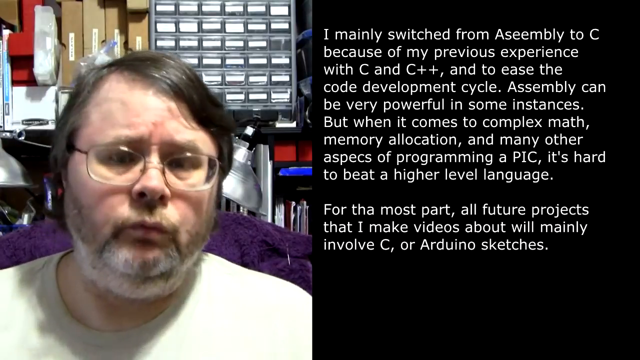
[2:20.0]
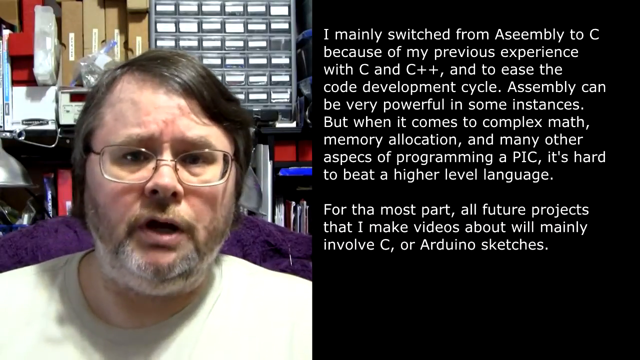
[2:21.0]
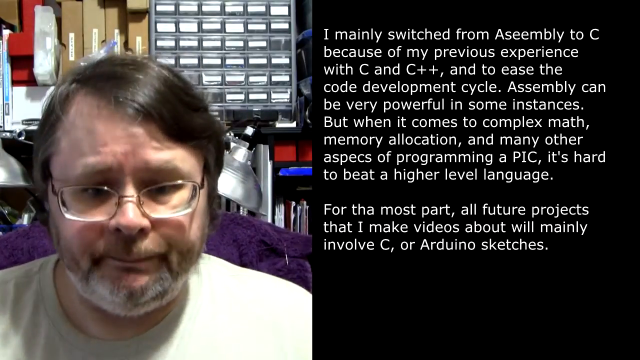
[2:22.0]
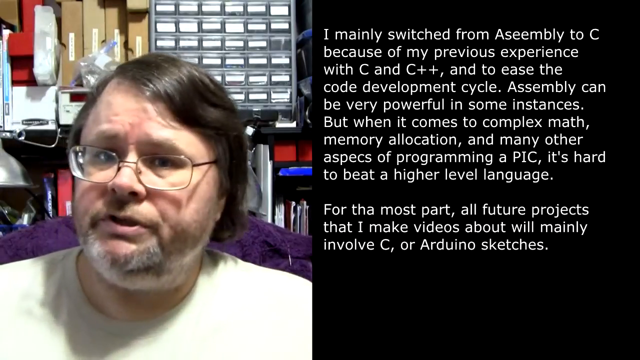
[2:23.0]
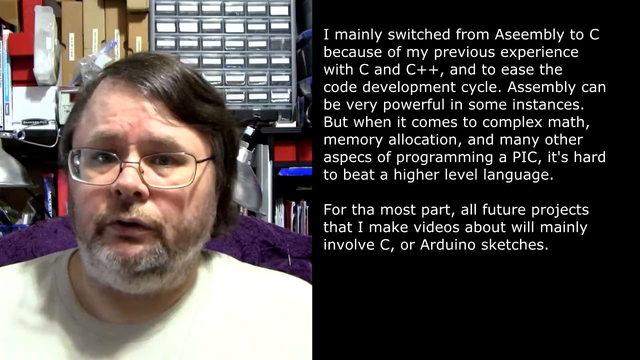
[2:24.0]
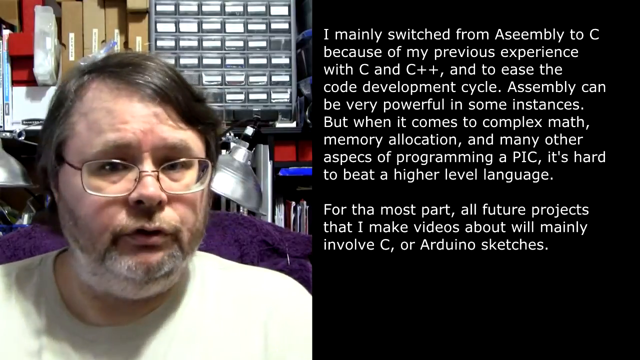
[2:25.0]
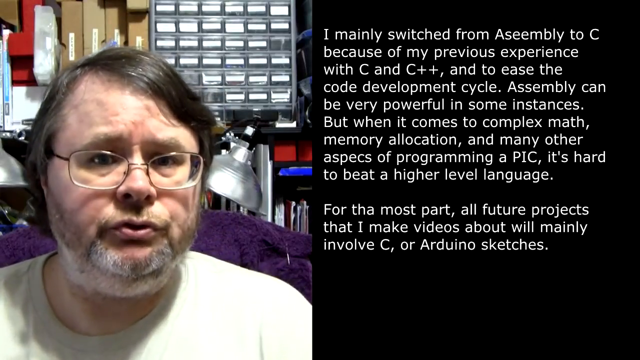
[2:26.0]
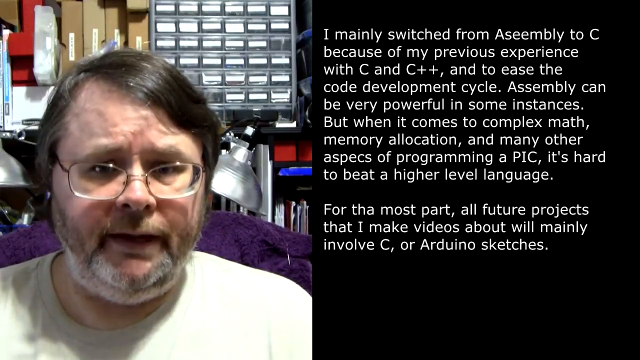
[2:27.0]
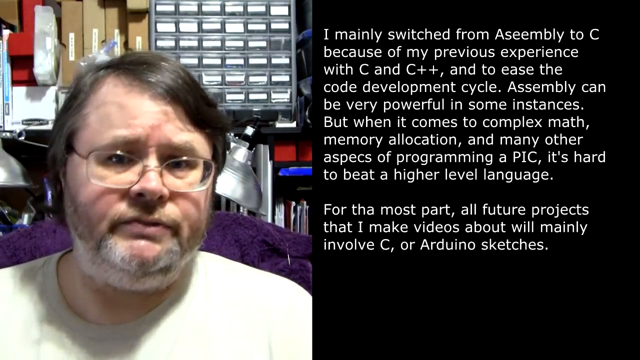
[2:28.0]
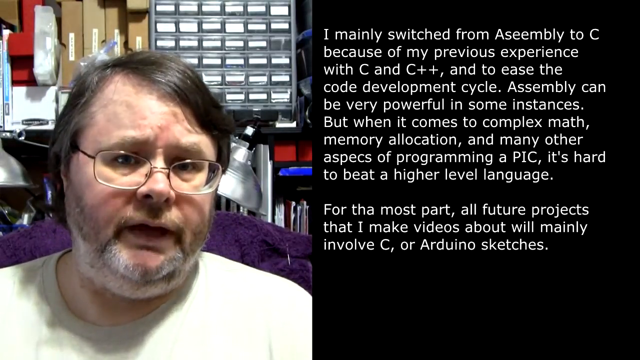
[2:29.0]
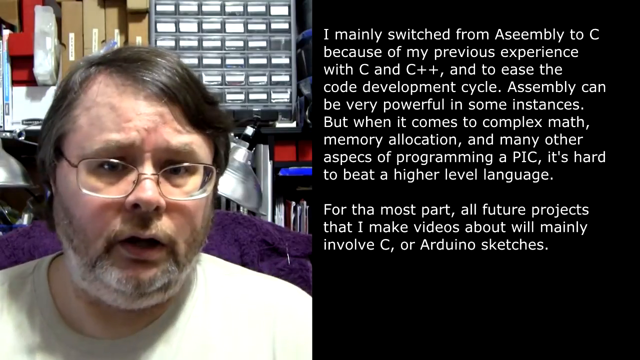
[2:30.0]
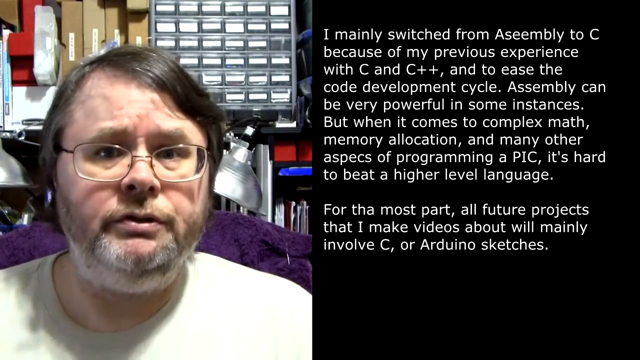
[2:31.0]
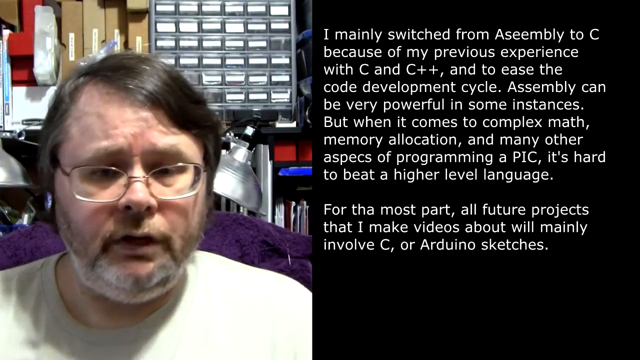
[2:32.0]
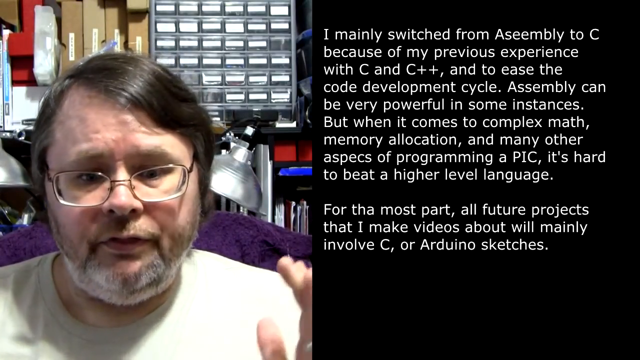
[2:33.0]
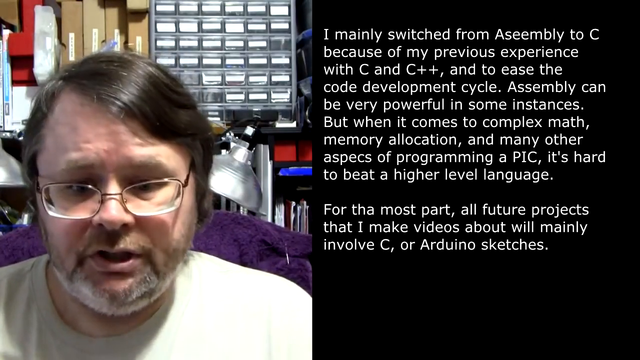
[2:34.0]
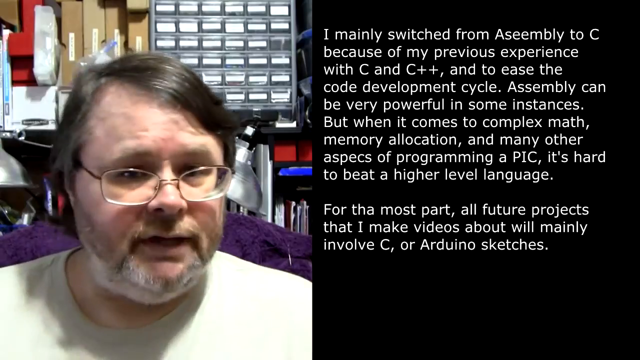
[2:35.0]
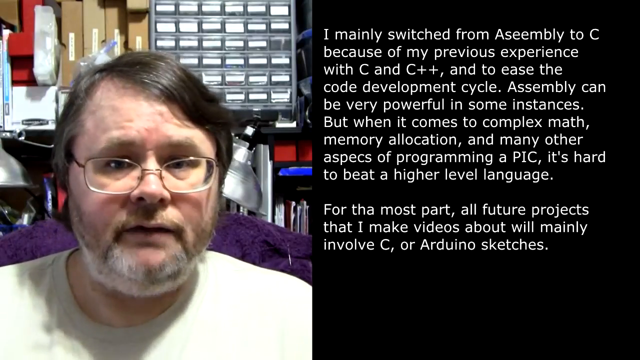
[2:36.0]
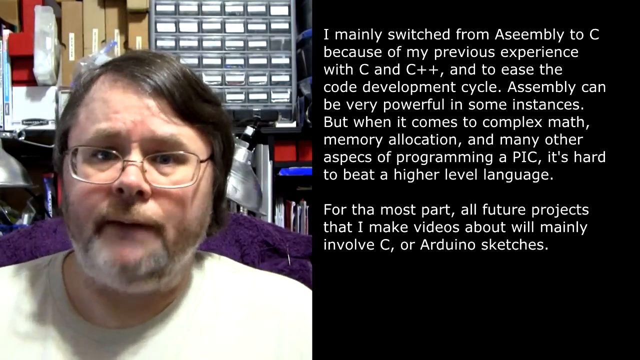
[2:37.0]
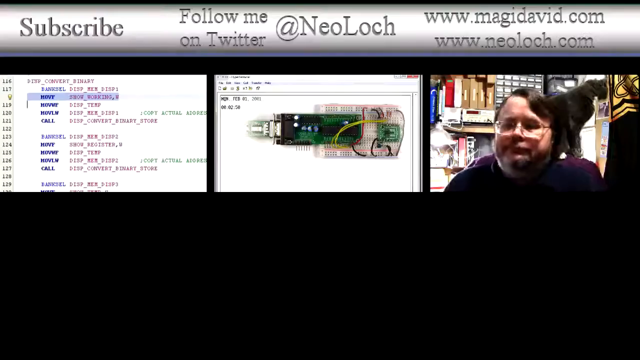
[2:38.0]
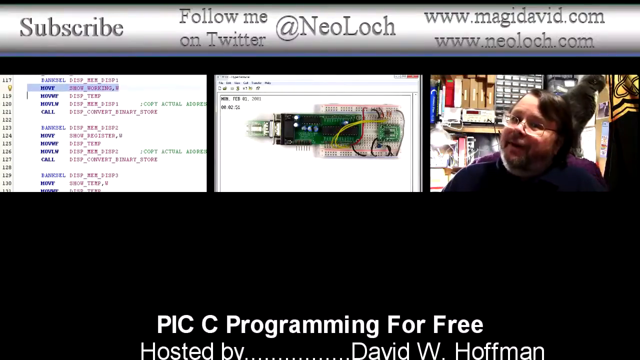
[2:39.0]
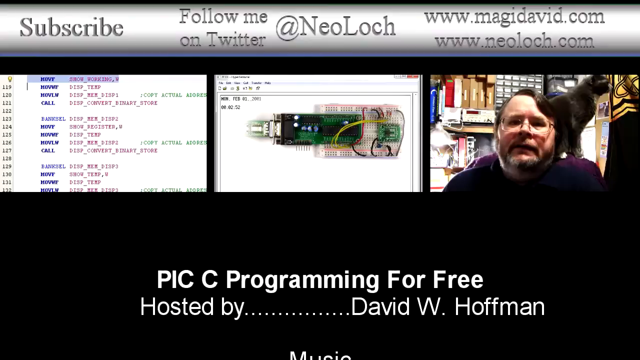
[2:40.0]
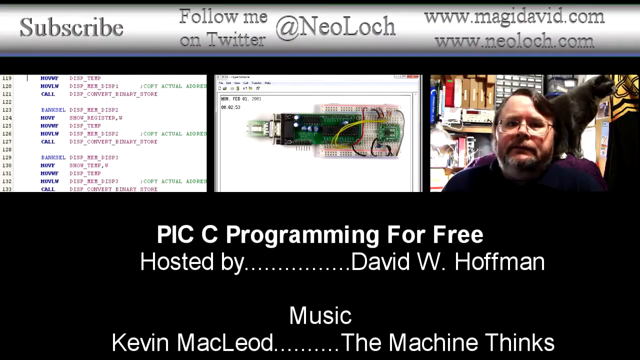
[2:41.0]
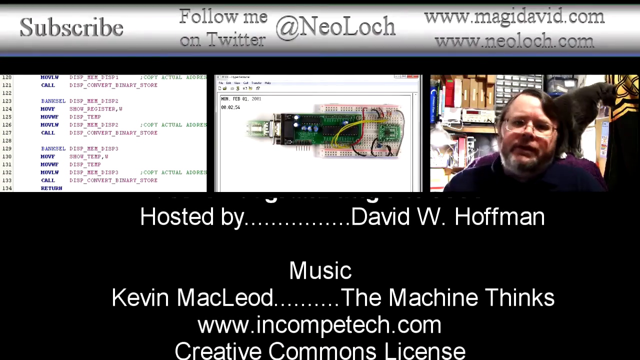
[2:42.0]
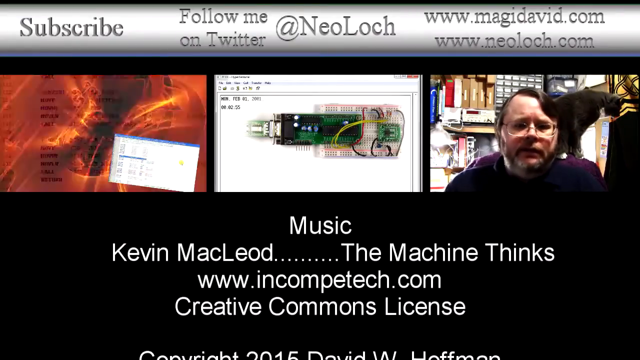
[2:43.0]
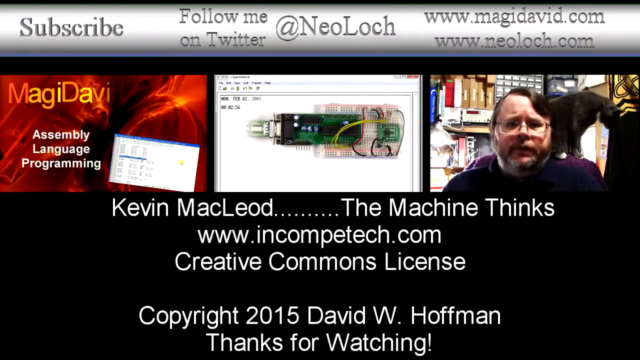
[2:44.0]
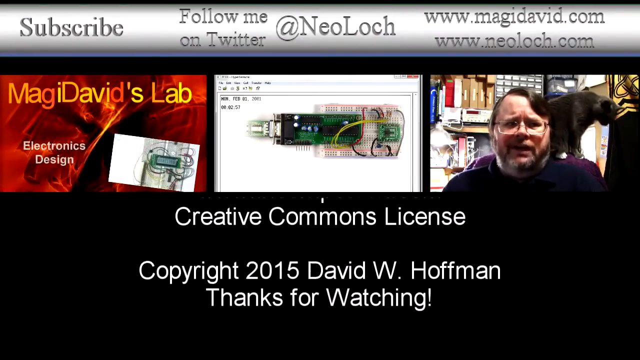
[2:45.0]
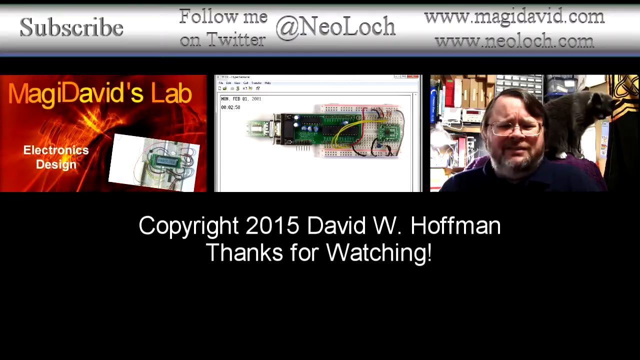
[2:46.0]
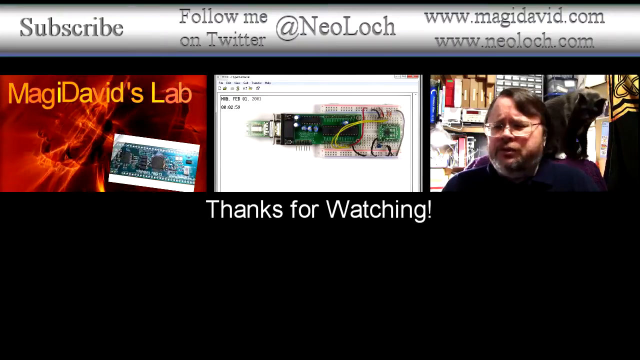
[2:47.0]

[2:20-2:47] The speaker talks very animatedly, and mid-speech he pulls his head and chin inward toward his body instead of keeping it raised, apparently maybe to avoid a hiccup. As soon as he makes this gesture, the video is edited so that he is cut out and put back into the frame in a completely different body position. He uses his hands a lot more and is much more animated, and more of his chest is visible, so he is maybe a bit further back from the camera. Toward the end he leans back, and then the video cuts to a black background with credits. A YouTube-style end screen follows with three videos in the background: Magic David's lab on the far left, some type of computer board imagery with a white background in the middle, and an image of the same man talking on the right. At the top of the screen is a subscribe button, at the top middle a "follow me on Twitter" line with a username, and a few websites to the right.